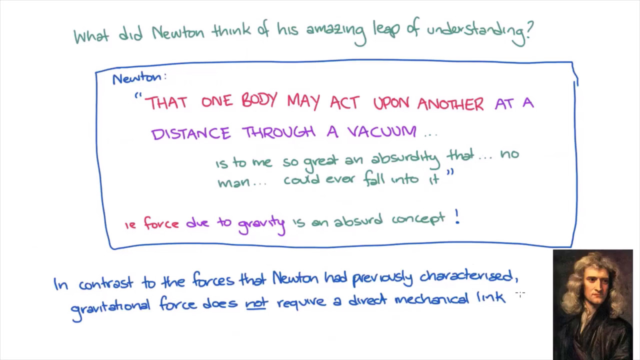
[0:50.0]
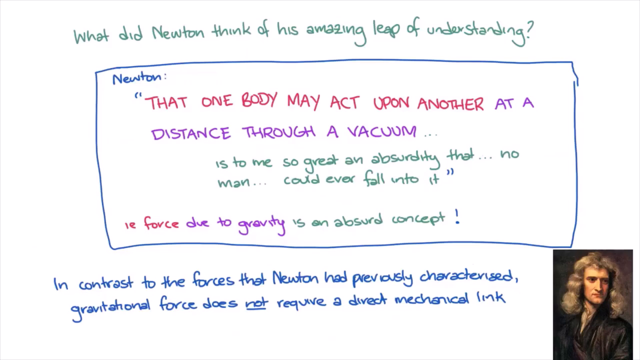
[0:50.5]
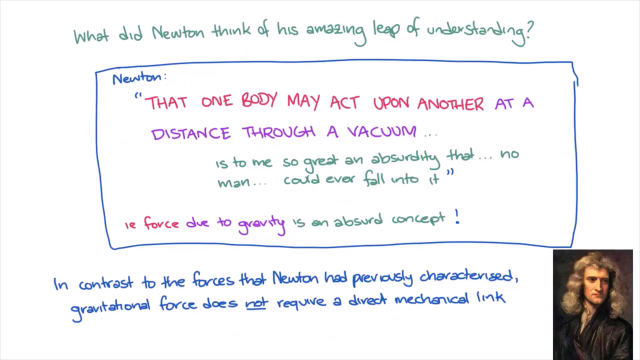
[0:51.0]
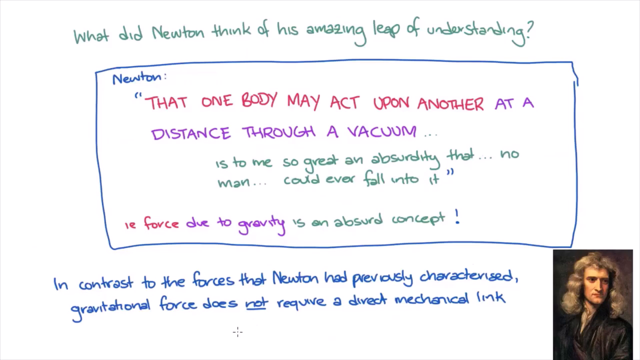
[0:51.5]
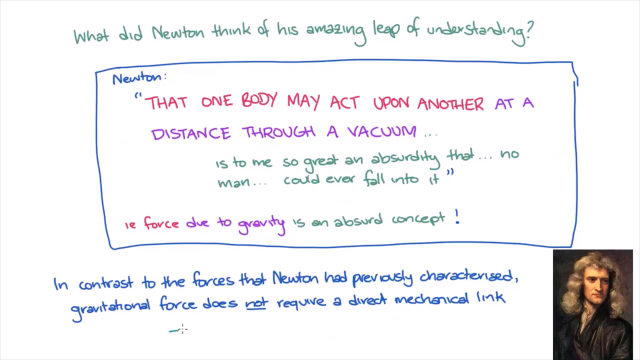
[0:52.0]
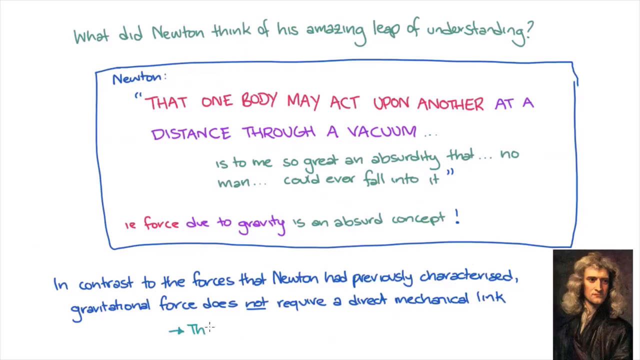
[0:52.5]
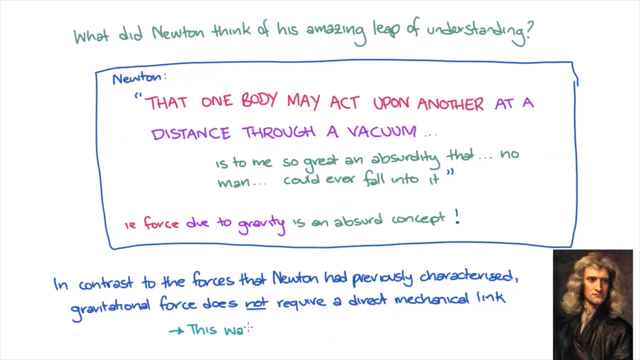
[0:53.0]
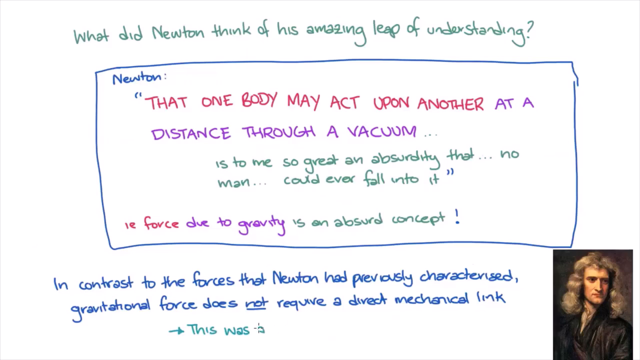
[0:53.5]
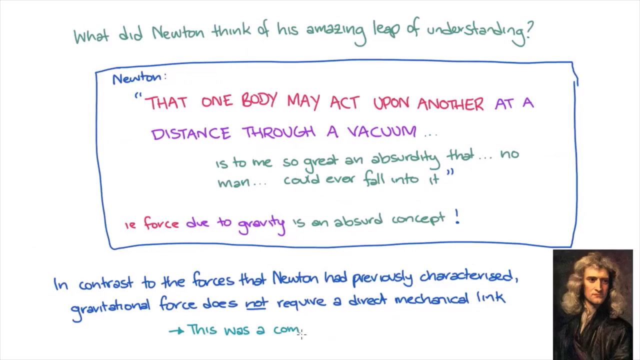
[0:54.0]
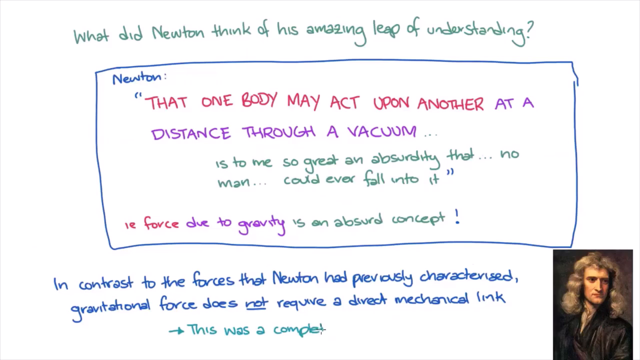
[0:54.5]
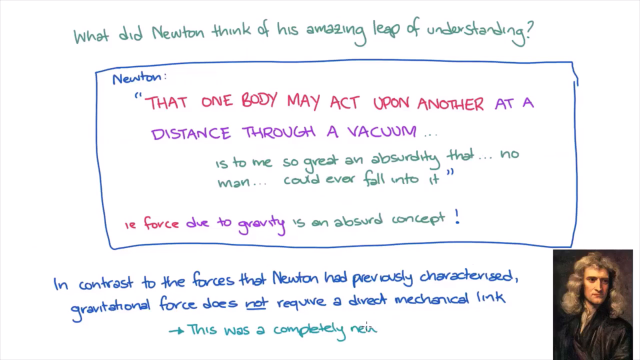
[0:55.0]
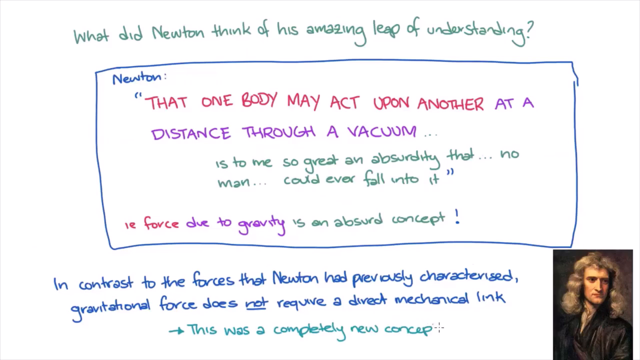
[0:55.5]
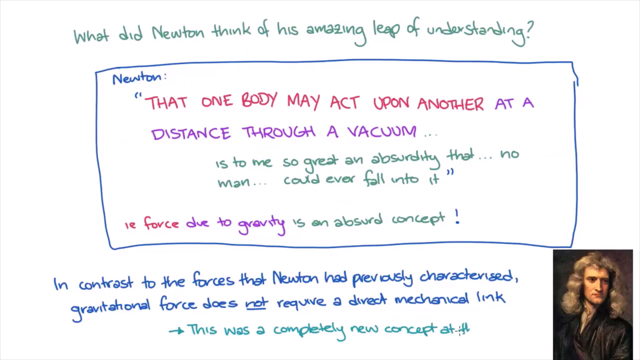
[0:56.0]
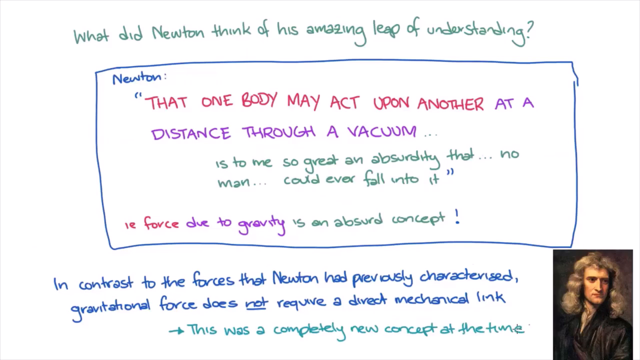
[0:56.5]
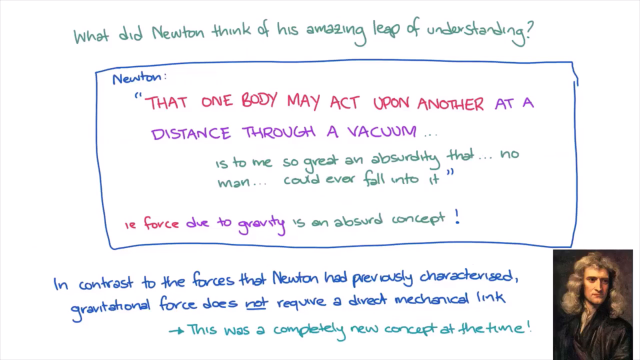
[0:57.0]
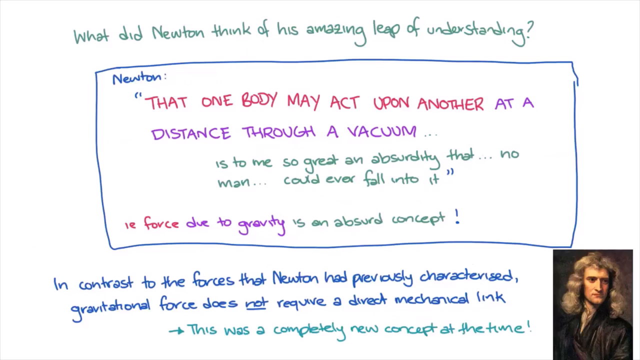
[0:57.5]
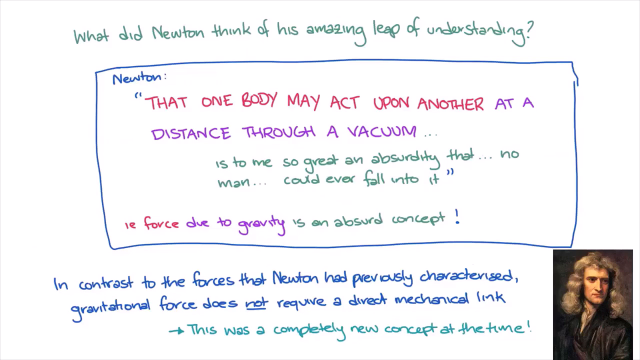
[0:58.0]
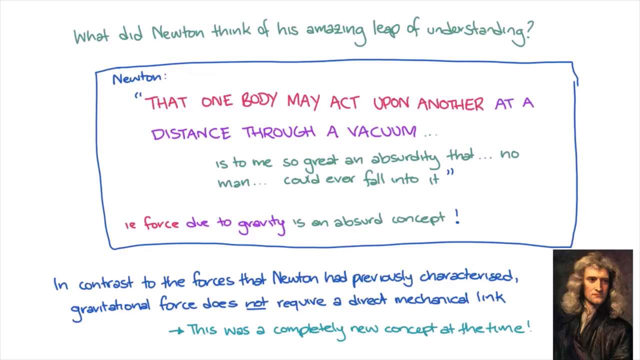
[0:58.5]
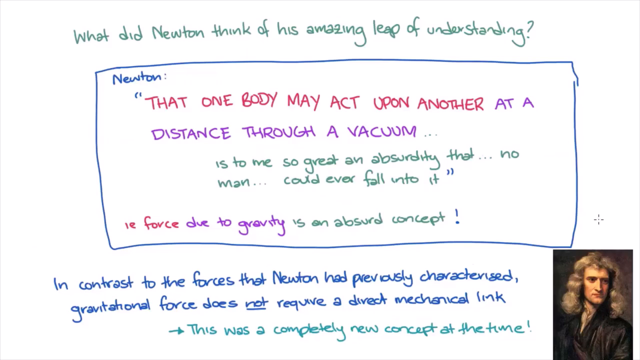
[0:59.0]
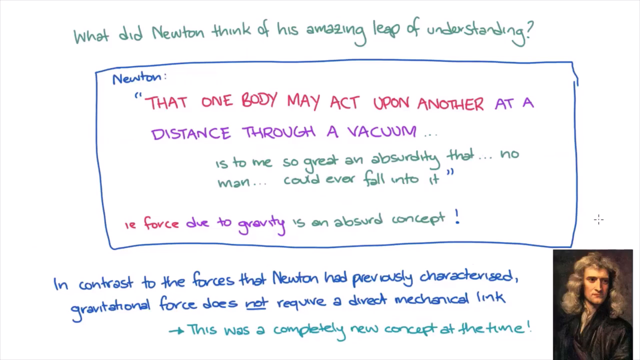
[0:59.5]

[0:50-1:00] The same screen, background and text remain, and new text is added at the very bottom, beginning with a green arrow and reading "this was a completely new concept at the time." This is the last sentence, written in green text, and after it the video ends. A small picture of Isaac Newton remains in the bottom right corner.